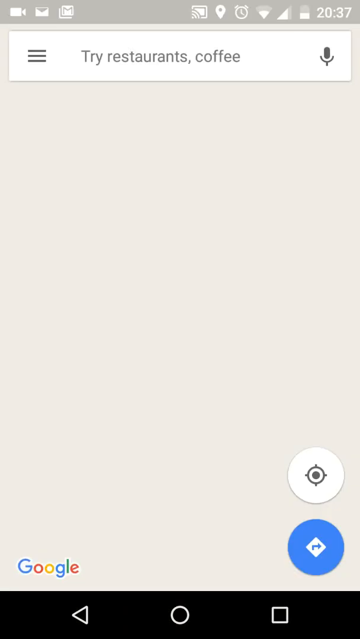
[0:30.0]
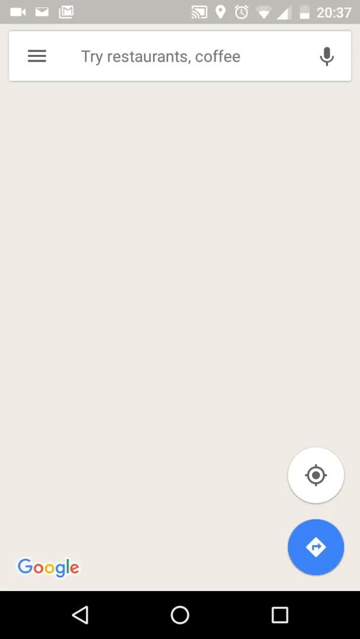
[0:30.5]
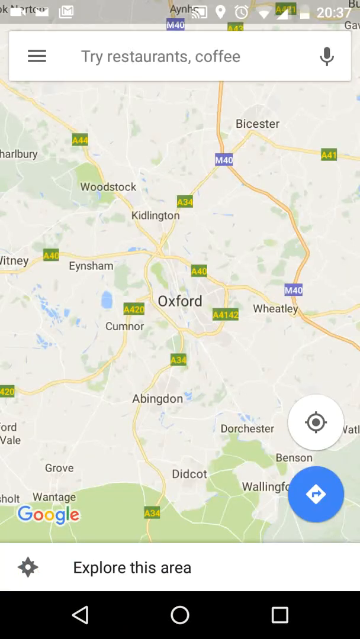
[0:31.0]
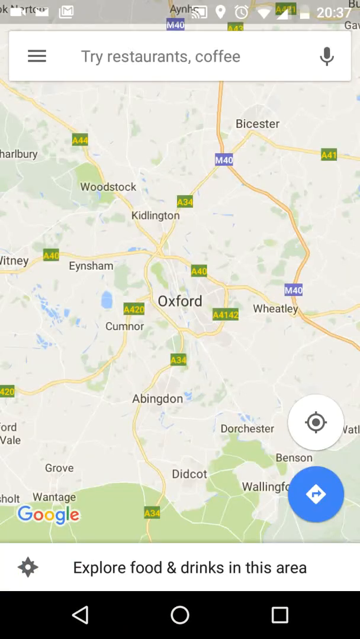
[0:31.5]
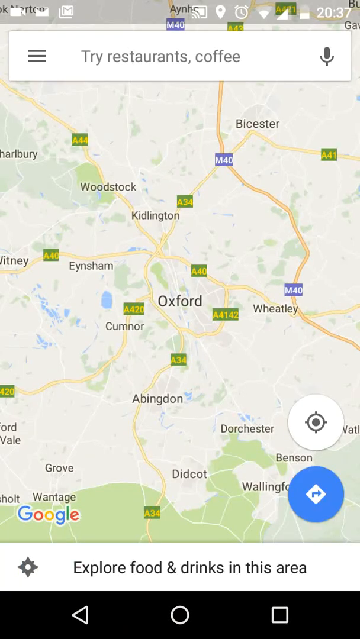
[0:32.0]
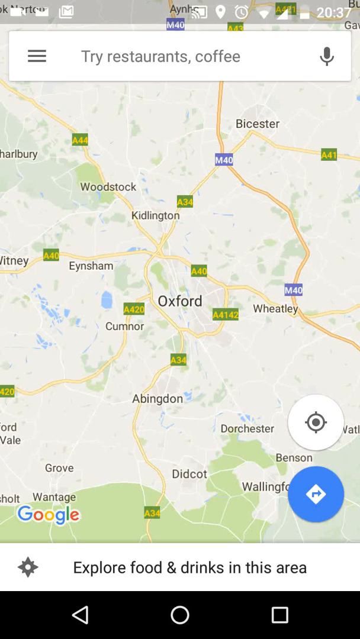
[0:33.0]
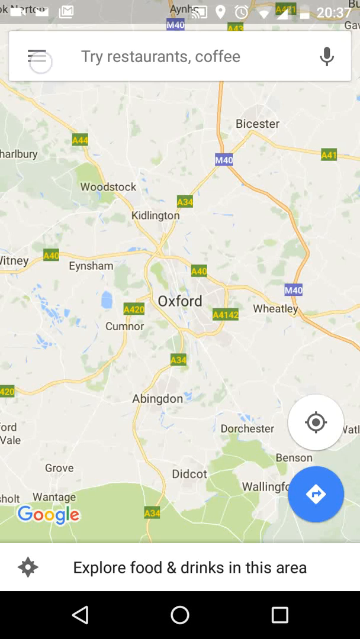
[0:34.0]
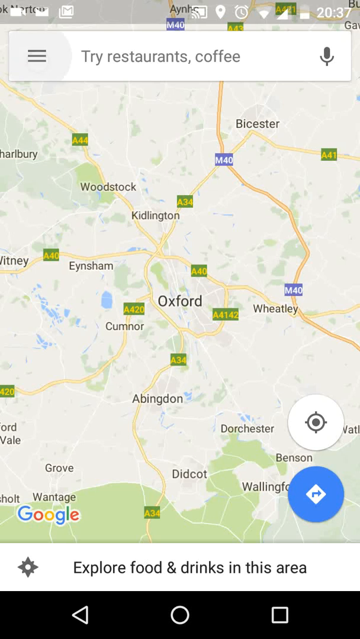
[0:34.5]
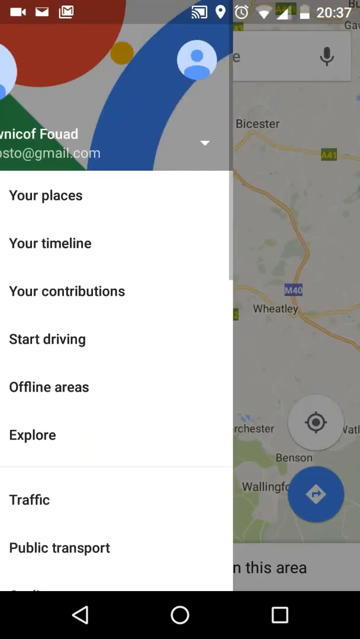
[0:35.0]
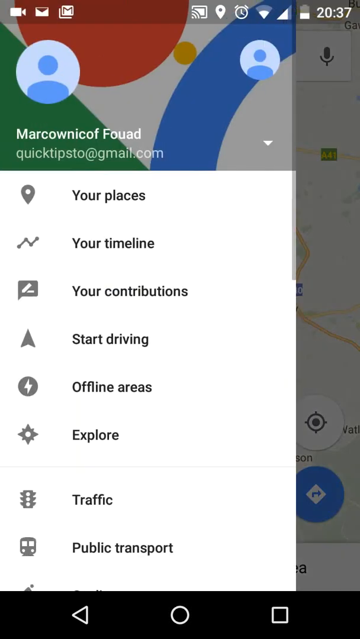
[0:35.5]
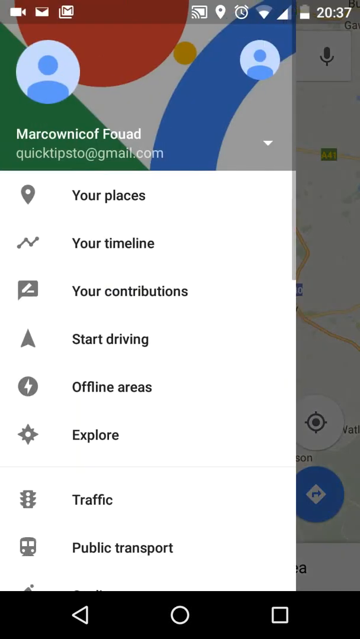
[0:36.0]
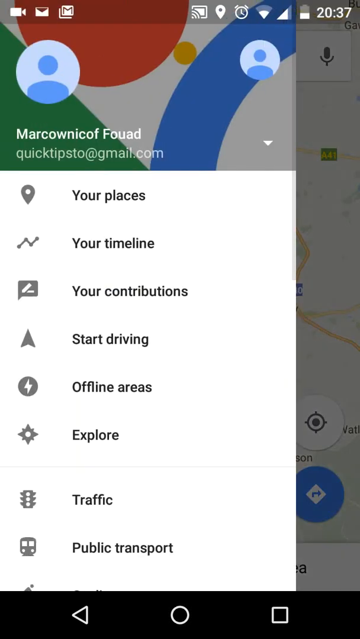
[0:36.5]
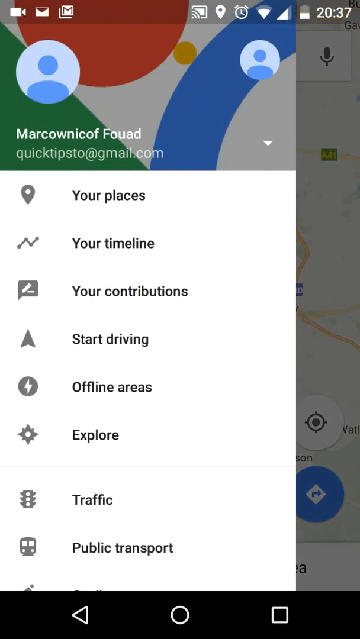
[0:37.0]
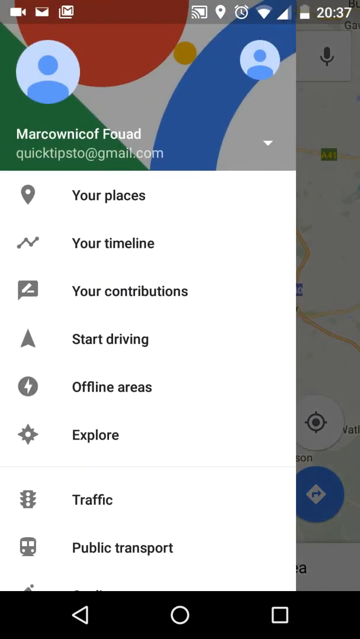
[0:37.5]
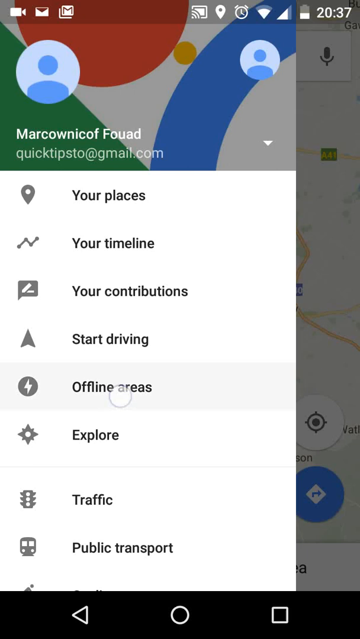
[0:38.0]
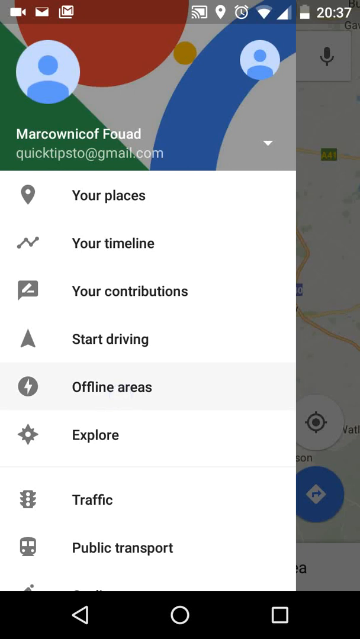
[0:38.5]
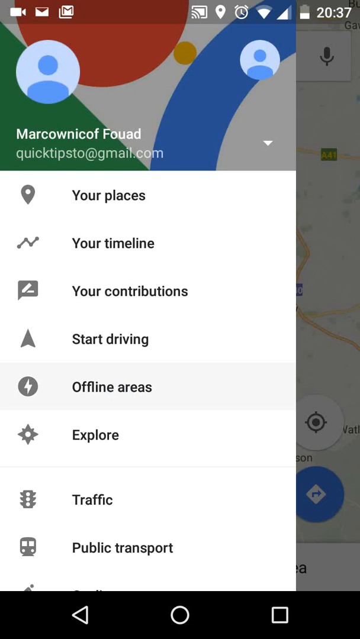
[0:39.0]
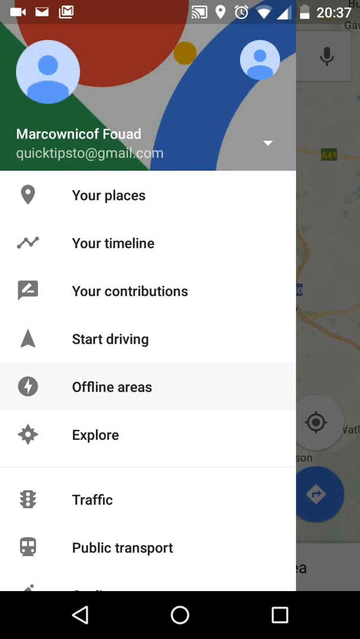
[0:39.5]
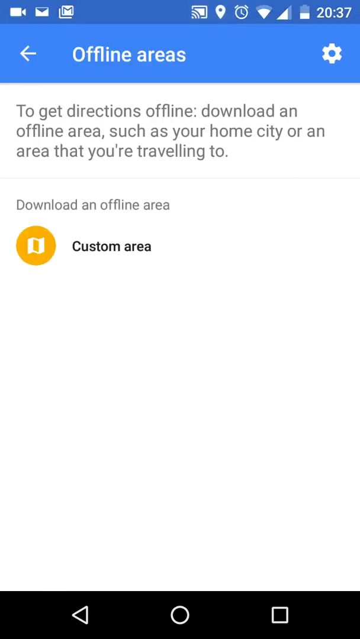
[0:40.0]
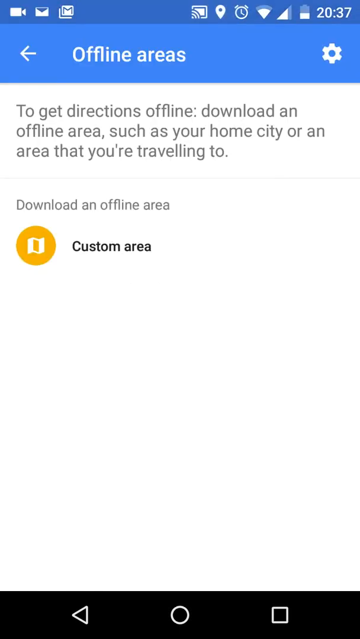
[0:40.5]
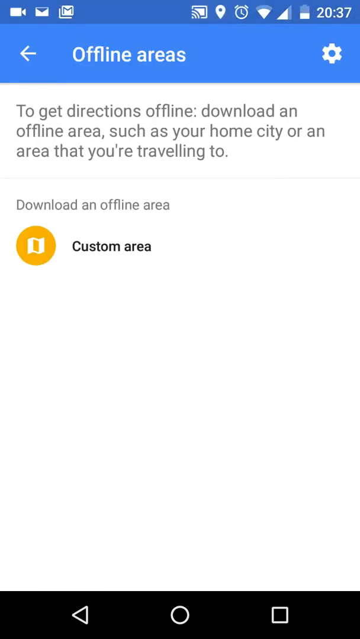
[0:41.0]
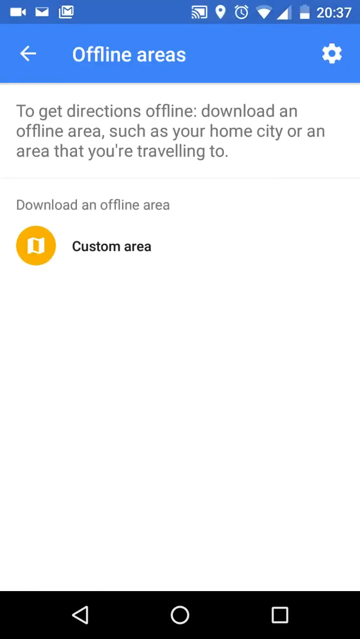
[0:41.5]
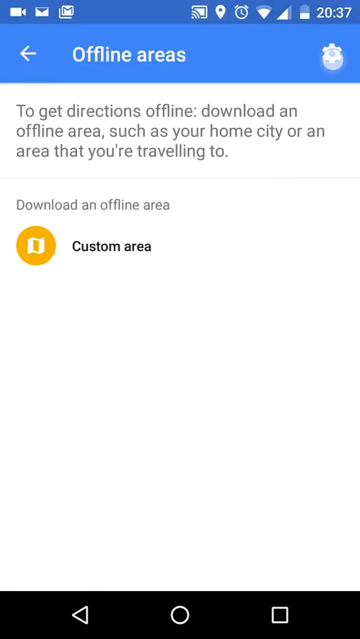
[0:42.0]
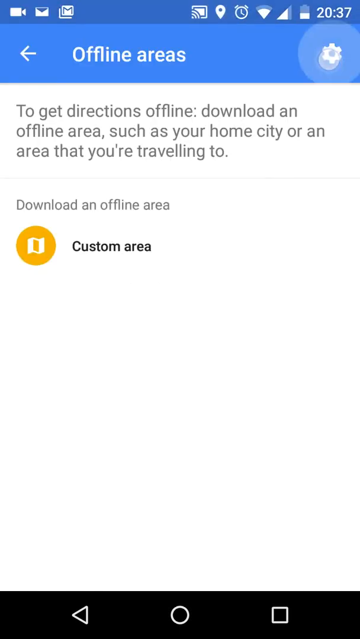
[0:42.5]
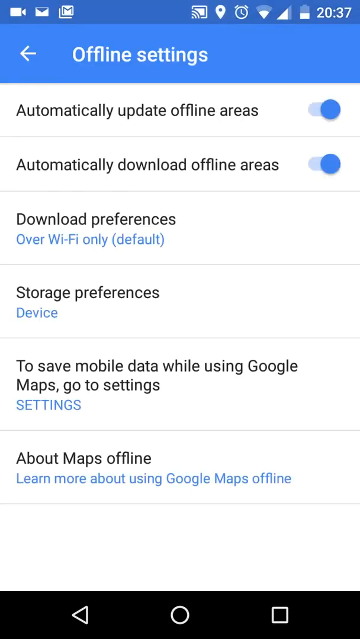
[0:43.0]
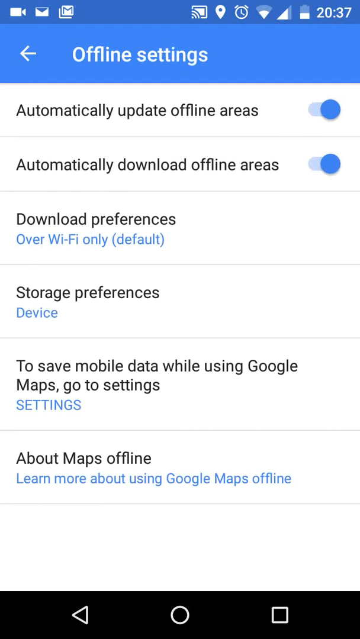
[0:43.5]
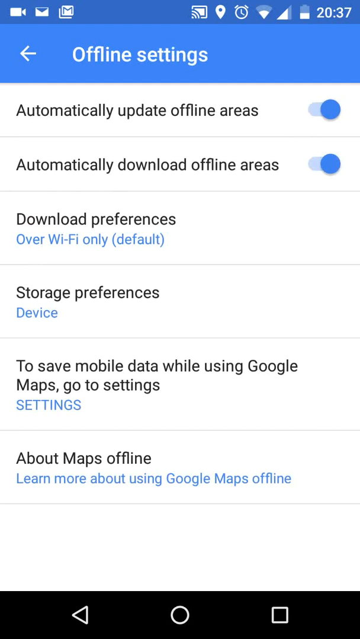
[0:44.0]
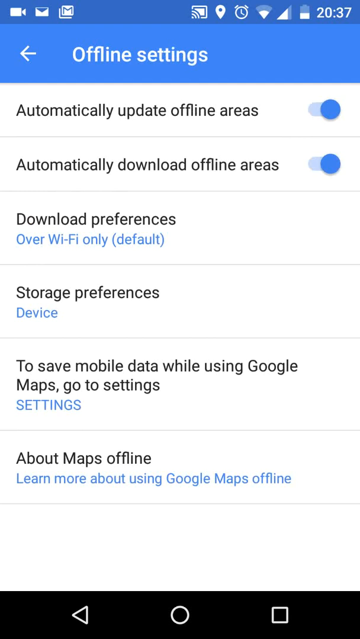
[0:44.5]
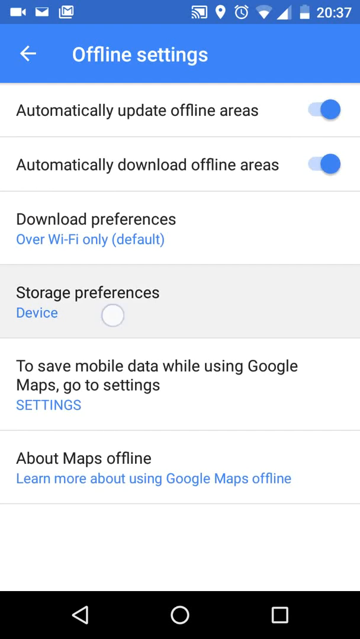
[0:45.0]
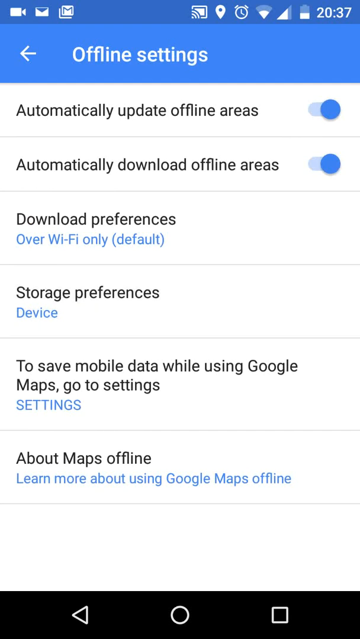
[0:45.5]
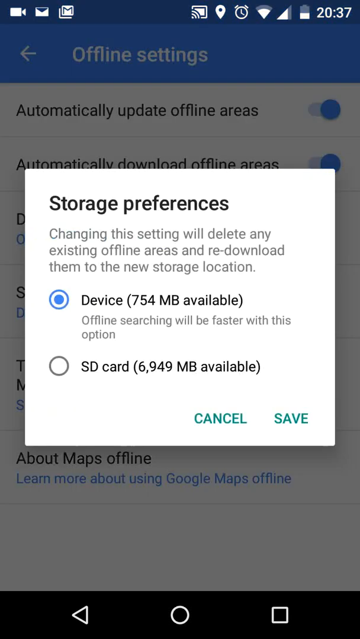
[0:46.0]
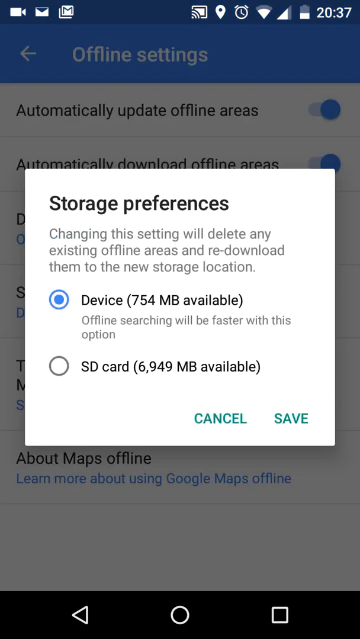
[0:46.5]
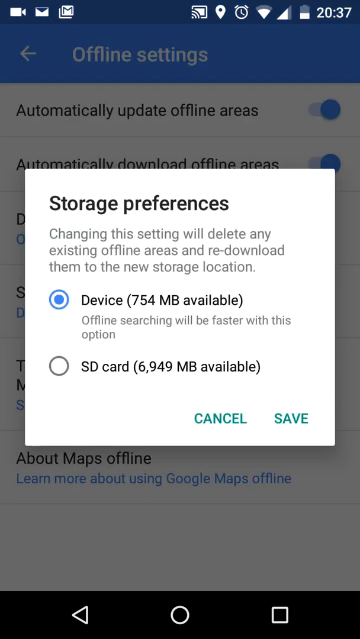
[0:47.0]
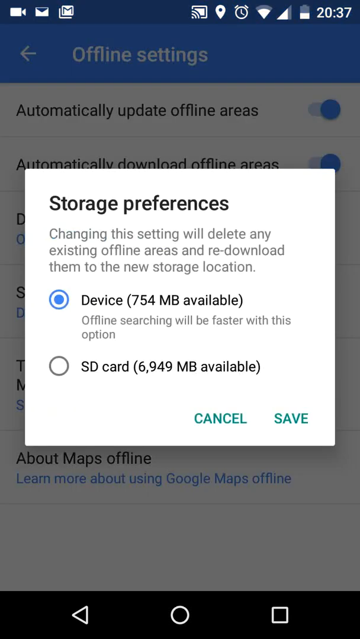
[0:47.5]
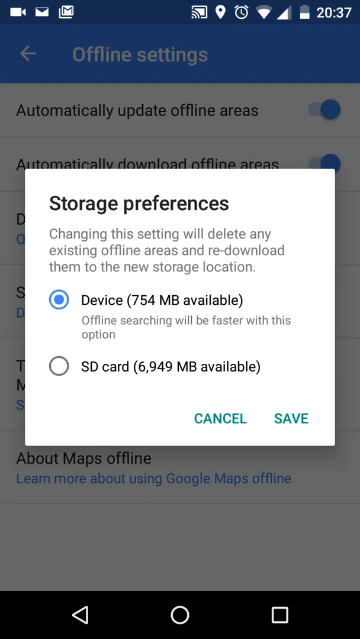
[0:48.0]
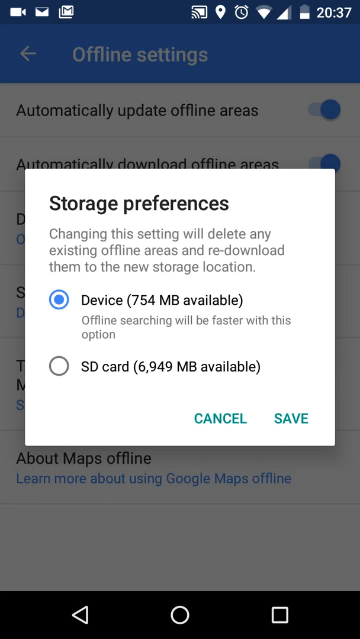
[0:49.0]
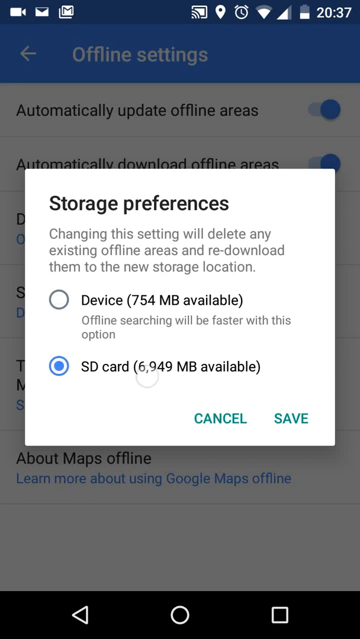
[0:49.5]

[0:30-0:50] Google Maps is open. At the top is a white text field that says "try restaurants", with a mic icon for speaking instead of typing and three lines to the left for a menu. A map shows Oxford and what look like surrounding cities, and at the very bottom it says "explore foods and drinks". After a tap, a settings menu slides out from the left side, showing "FOUAD" with a last name and a Gmail address underneath. Below is a list of options, each with a graphic and its name to the right, including a pin with "your places" and a timeline. He selects "offline areas": a blue bar at the top reads "offline areas" in white, text says directions can be gotten offline by downloading, and an orange button at the bottom is for customizing the area. Next comes a page of slider buttons for auto-updating offline and downloading offline, slid to the right, meaning on. He taps the fourth option from the top, "storage preferences". The blue bubble is on "device", showing 754 megabytes, and below it is "SD card" with almost seven thousand. He taps the bottom option.